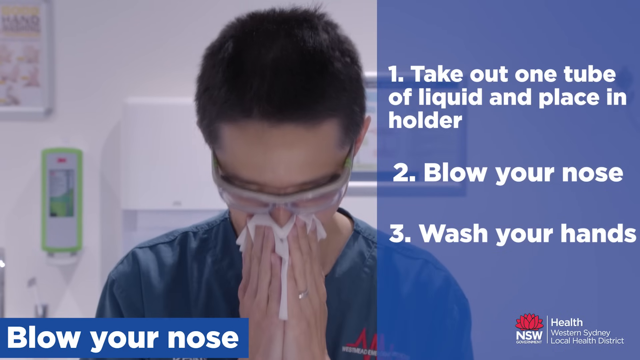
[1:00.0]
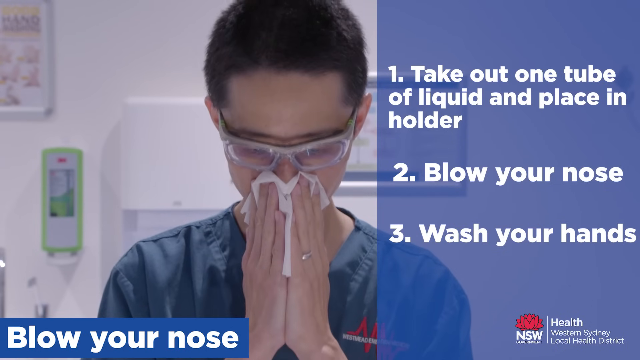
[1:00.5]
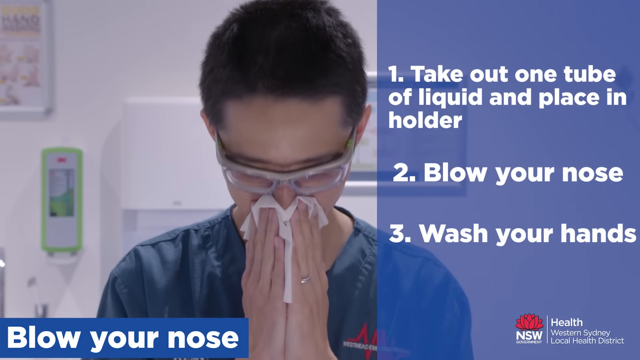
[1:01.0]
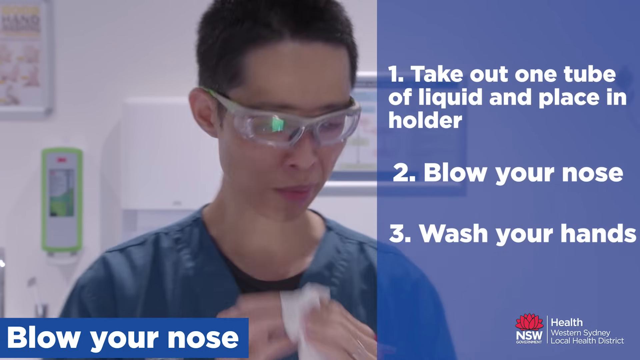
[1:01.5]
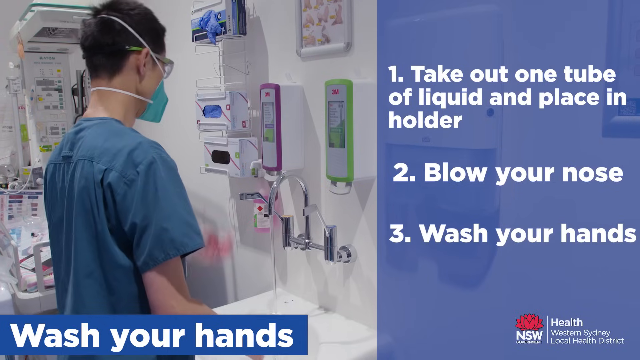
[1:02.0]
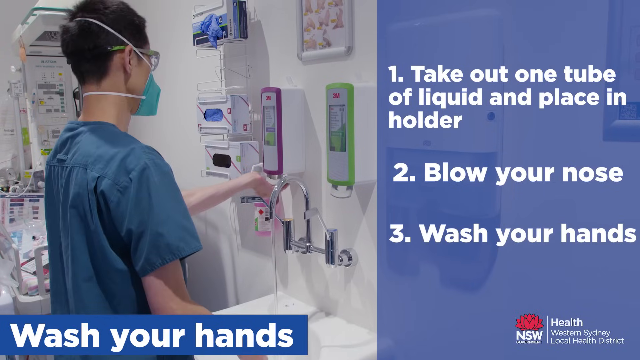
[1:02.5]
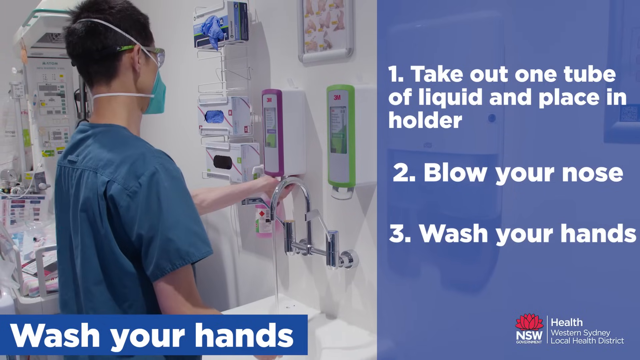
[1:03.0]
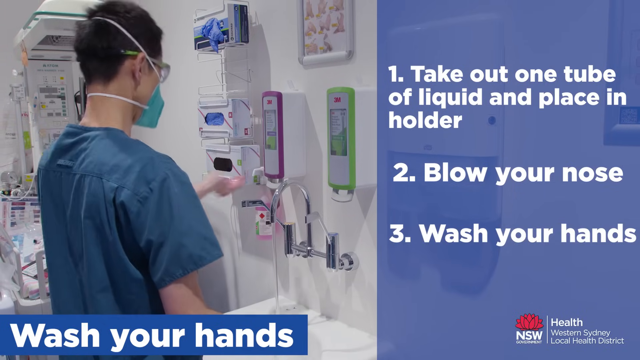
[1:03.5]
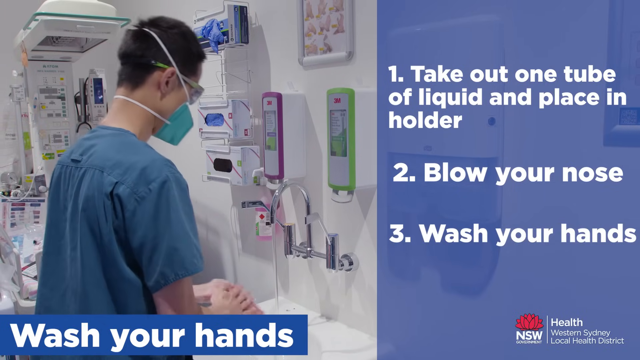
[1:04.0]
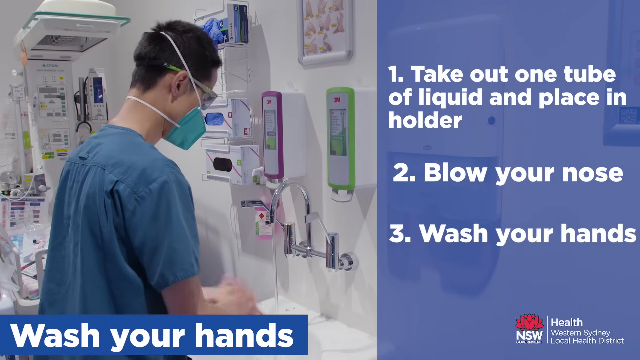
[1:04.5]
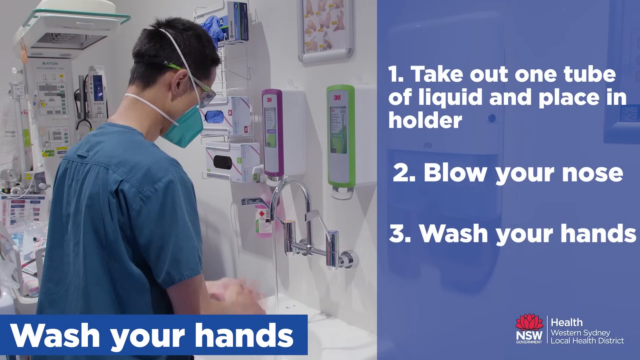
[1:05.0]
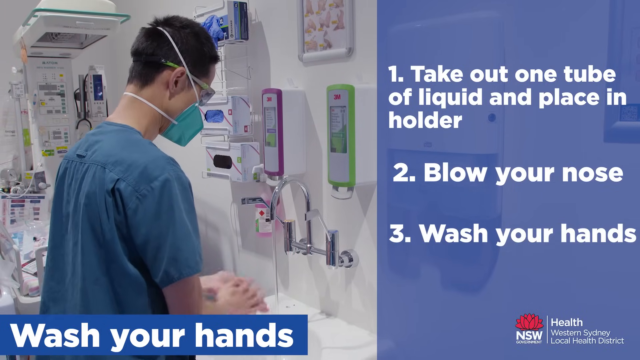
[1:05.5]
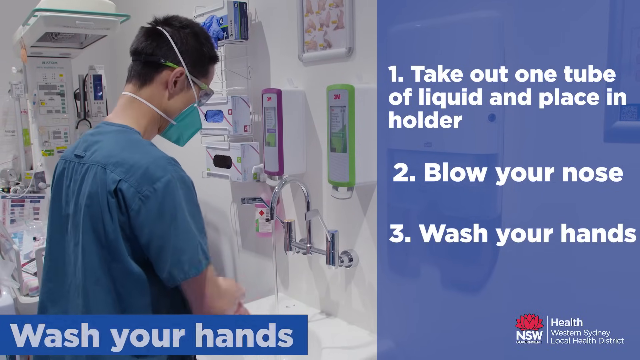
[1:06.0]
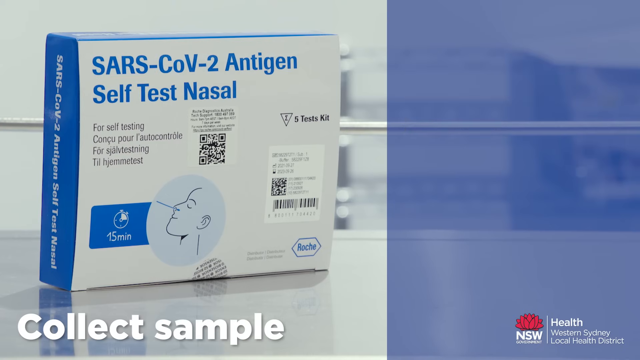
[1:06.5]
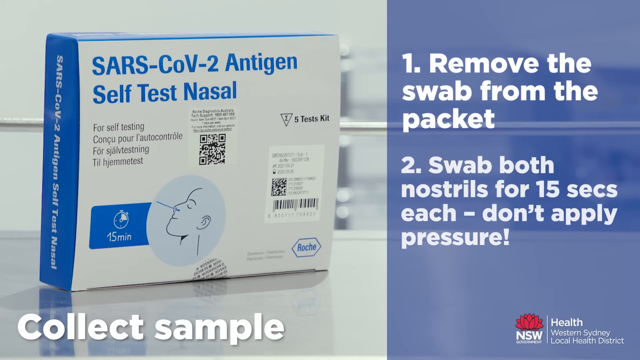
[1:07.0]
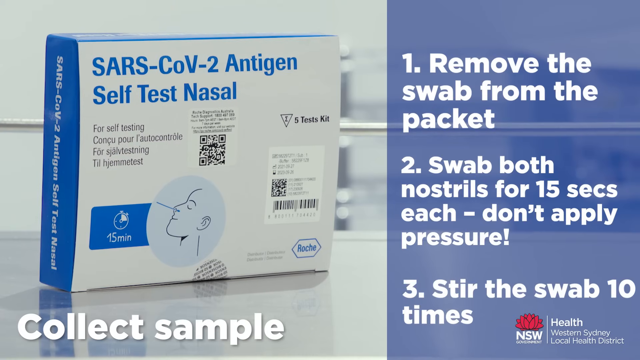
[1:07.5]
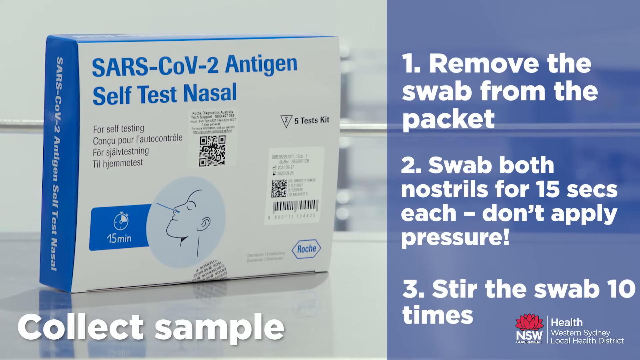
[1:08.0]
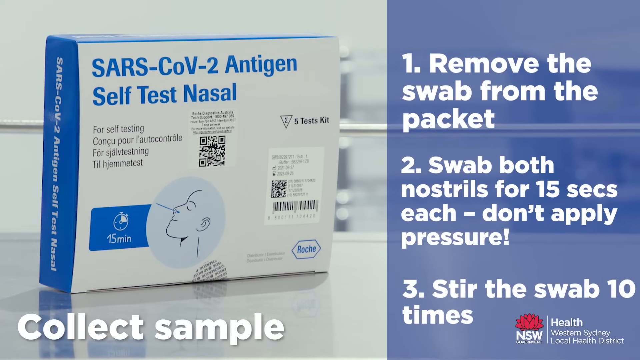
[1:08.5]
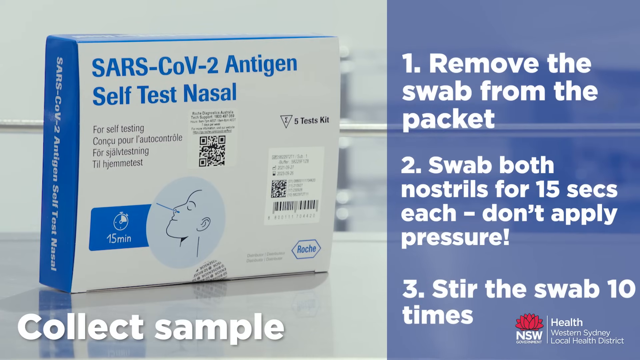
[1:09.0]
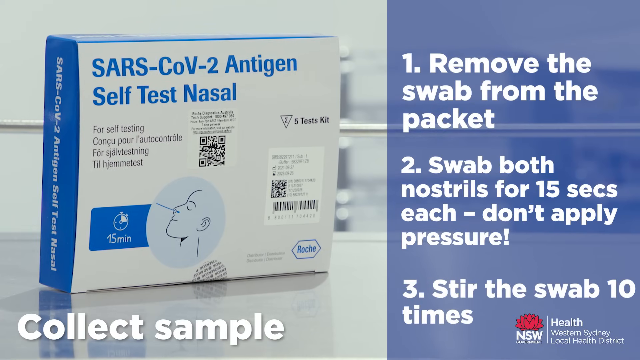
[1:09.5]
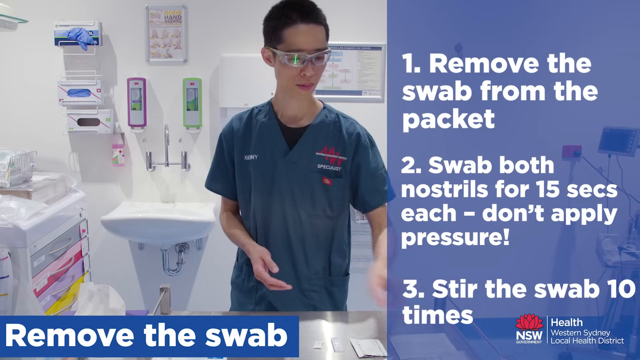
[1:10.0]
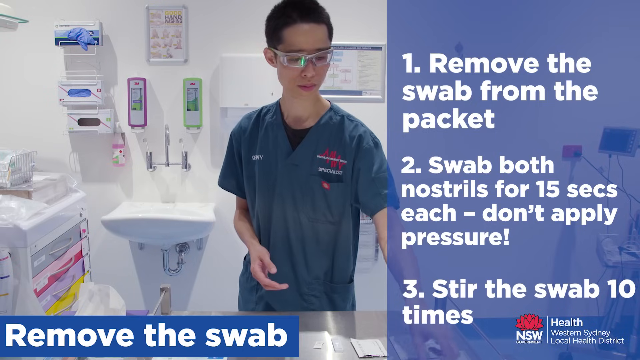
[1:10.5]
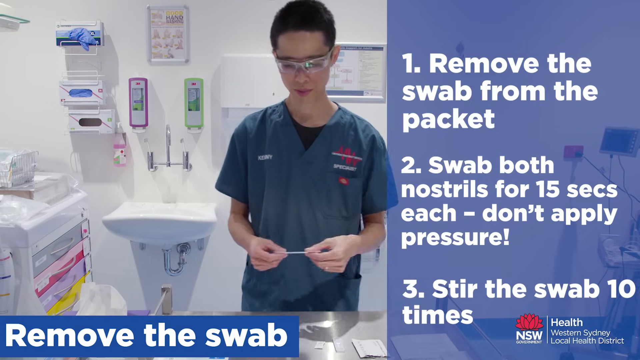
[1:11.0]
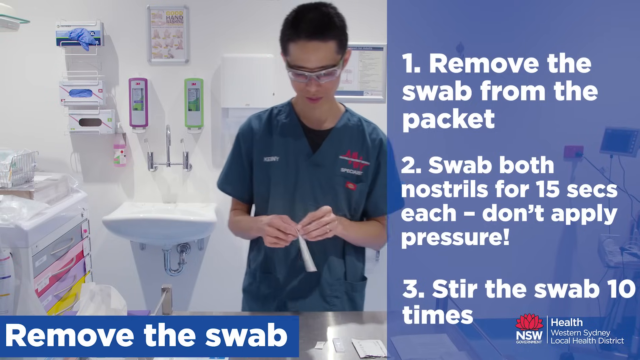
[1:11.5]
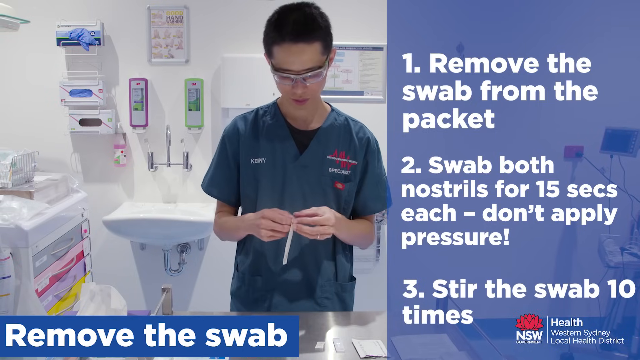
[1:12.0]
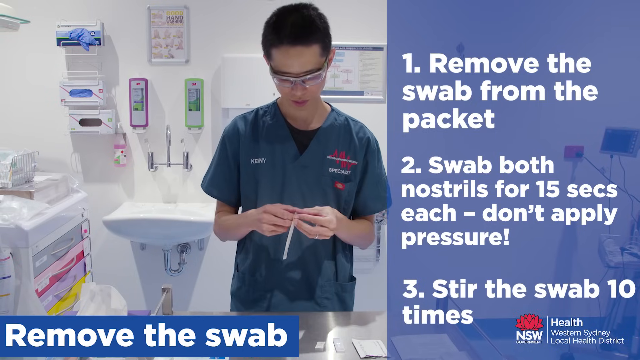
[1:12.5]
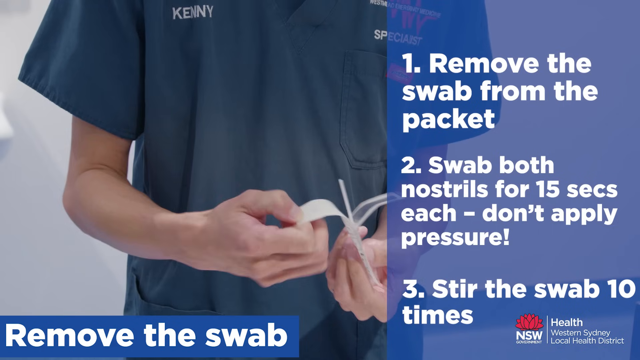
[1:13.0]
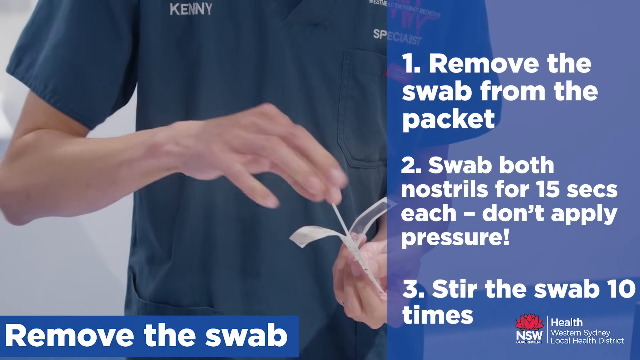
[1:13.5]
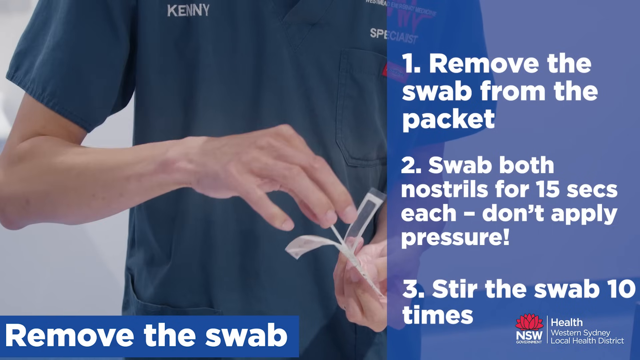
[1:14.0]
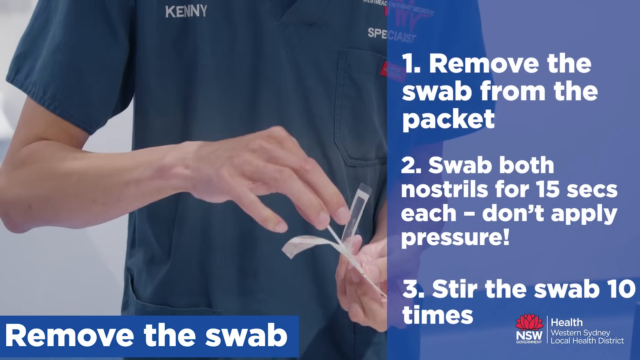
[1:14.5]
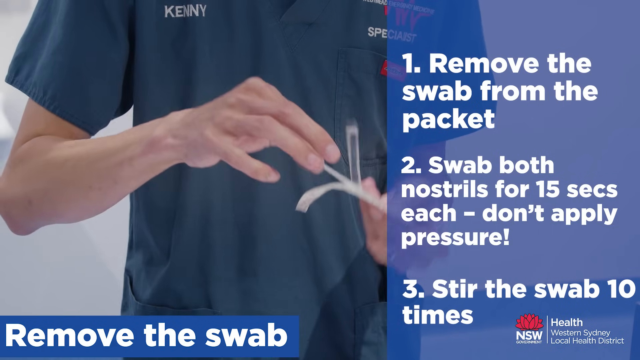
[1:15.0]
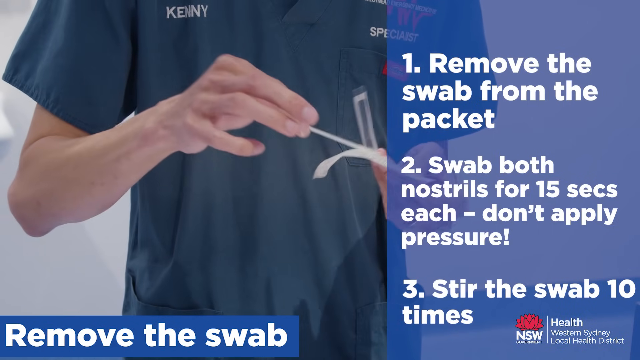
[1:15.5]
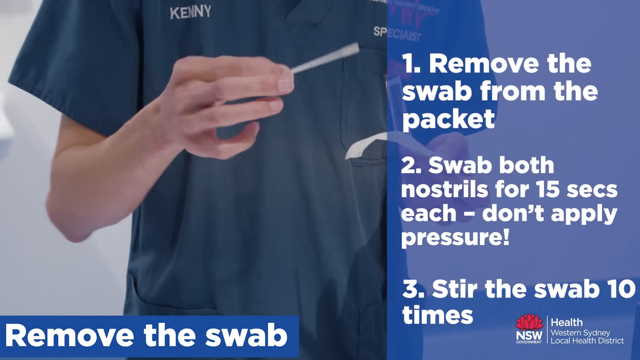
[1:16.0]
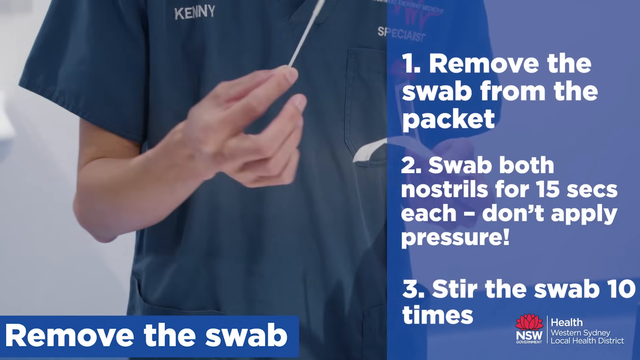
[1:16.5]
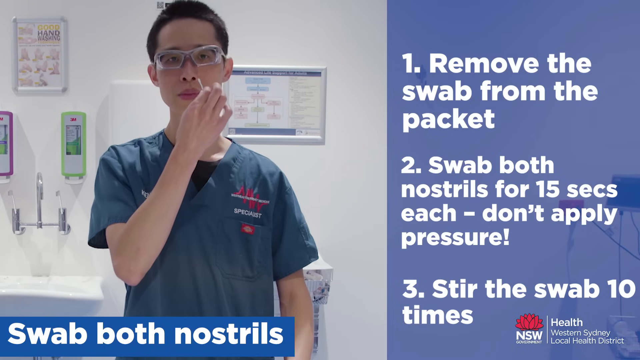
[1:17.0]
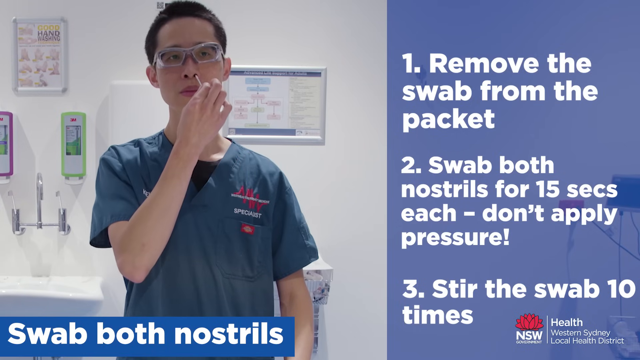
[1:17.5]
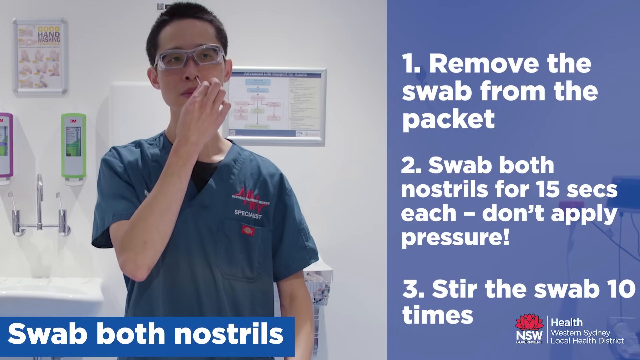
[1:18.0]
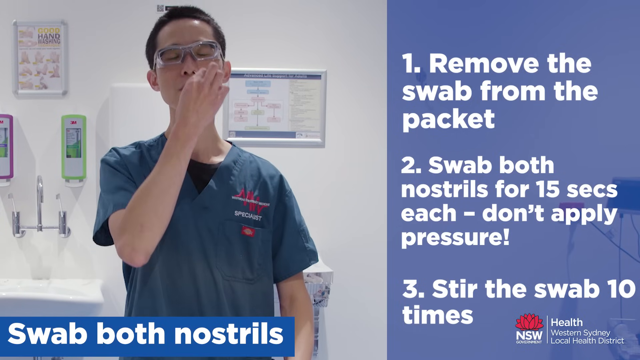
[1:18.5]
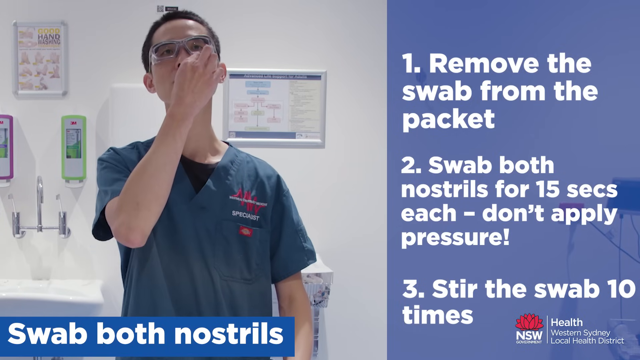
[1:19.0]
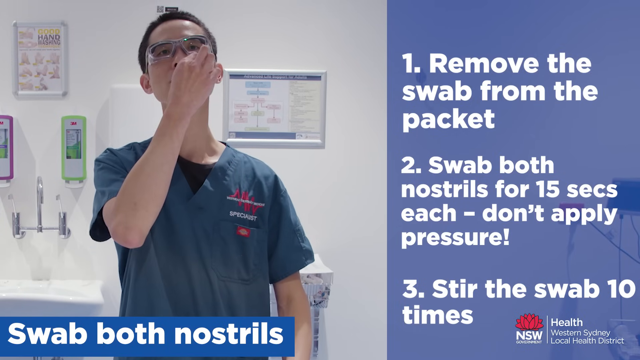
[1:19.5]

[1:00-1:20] A box of SARS-CoV-2 antigen self-test nasal is shown, with text on the right side of the screen reading "read the instructions, wash your hands, unpack the tests." The box is white with blue edges and has a drawing of someone's face with a swab up their nose and a picture of a clock. The scene then moves to another room, where an Asian man wearing goggles and a face mask reads the instructions, which are white and fold out into a big sheet; he follows along with his fingers. He goes over to the sink, gets some soap and washes his hands. He then sets up the test, taking all the pieces out and setting them up on a metal table.